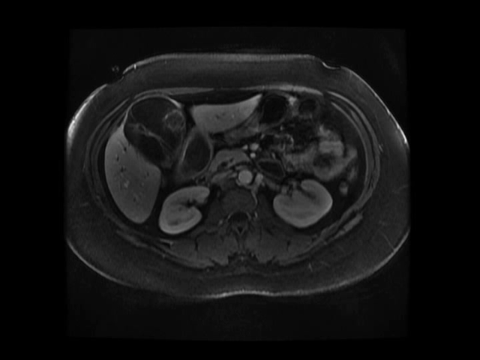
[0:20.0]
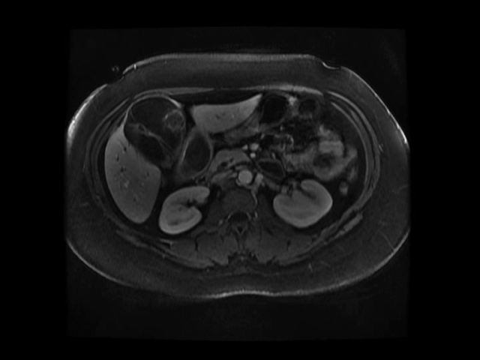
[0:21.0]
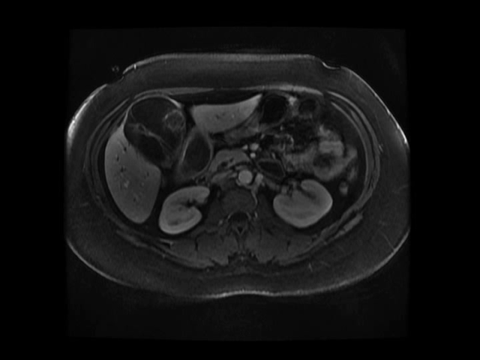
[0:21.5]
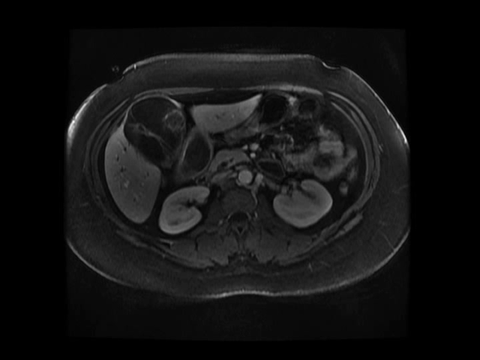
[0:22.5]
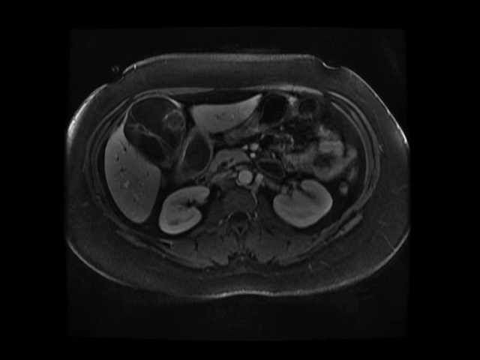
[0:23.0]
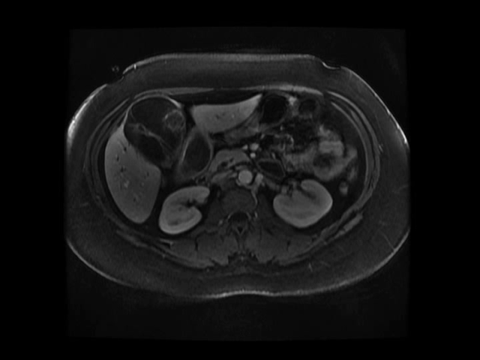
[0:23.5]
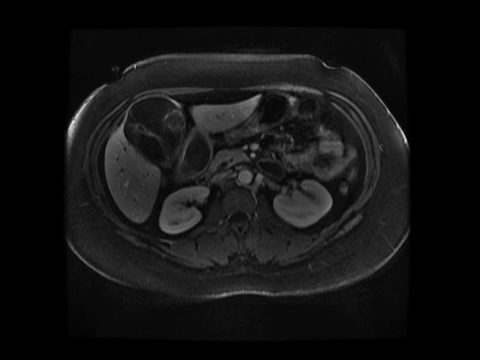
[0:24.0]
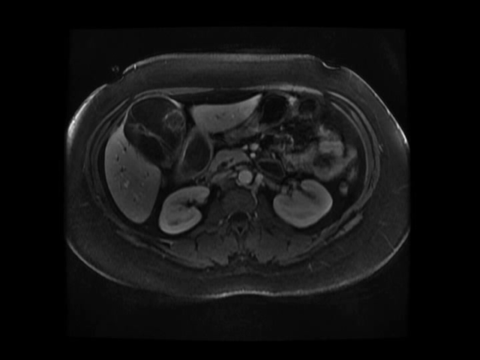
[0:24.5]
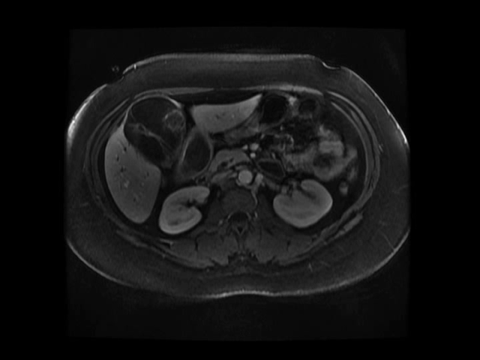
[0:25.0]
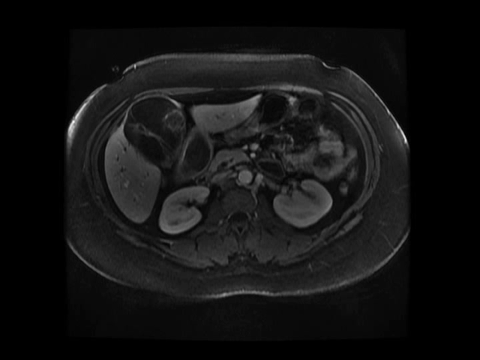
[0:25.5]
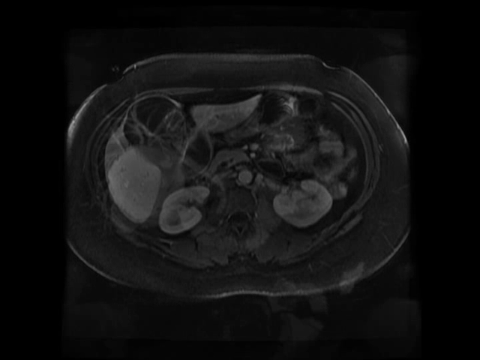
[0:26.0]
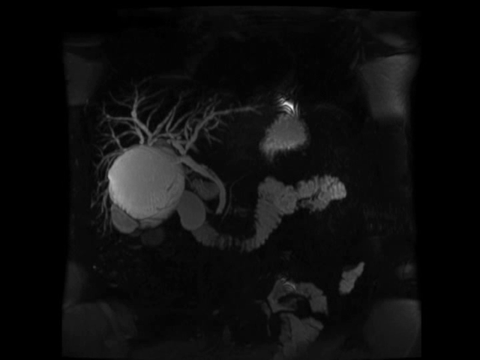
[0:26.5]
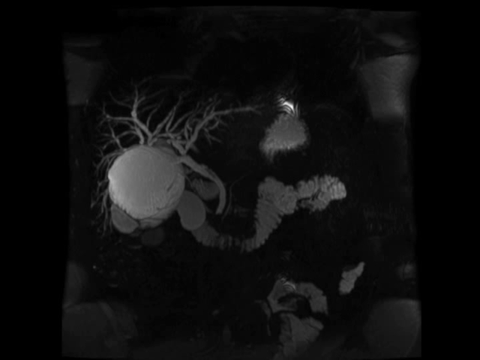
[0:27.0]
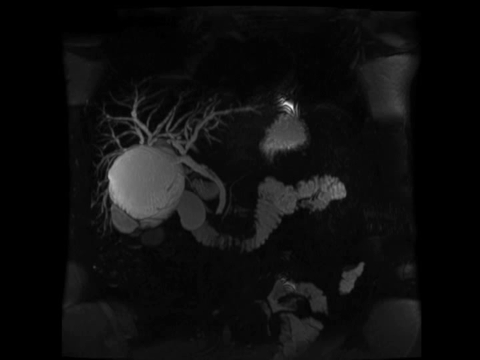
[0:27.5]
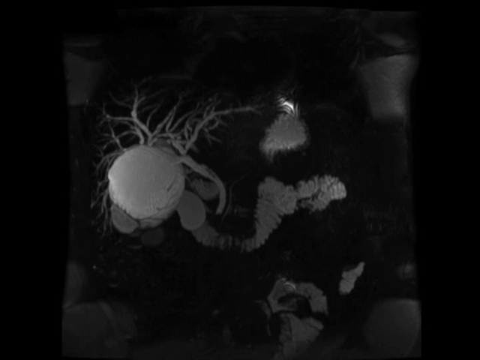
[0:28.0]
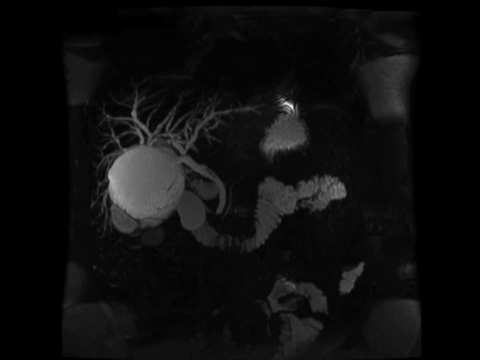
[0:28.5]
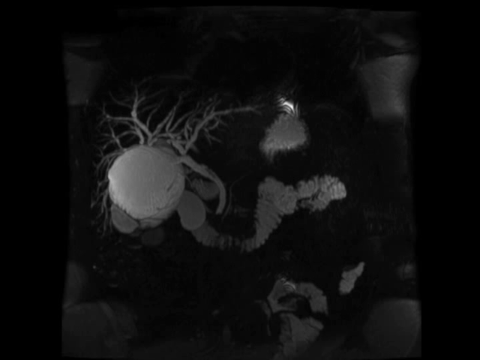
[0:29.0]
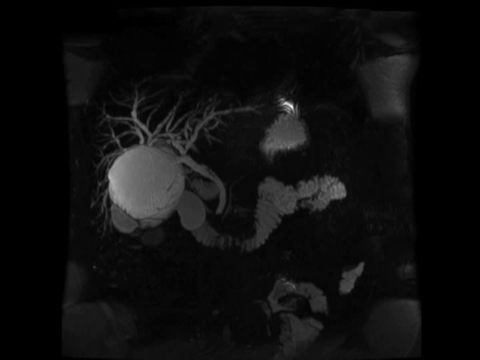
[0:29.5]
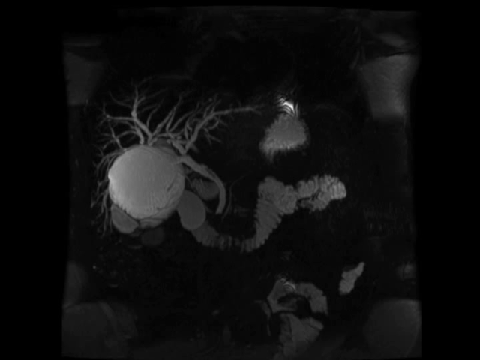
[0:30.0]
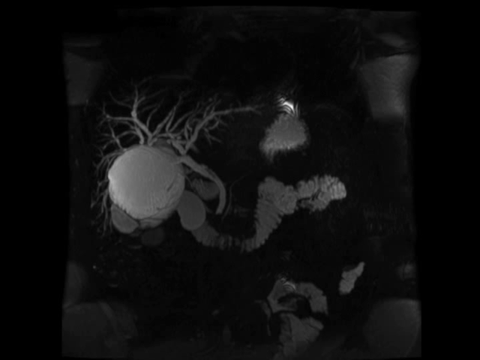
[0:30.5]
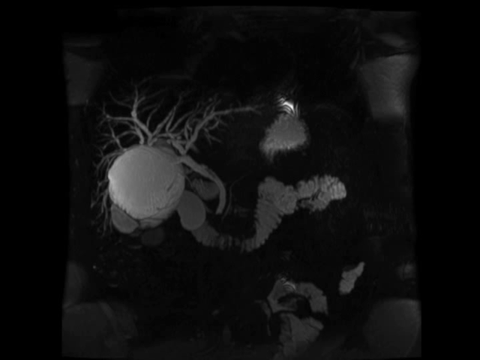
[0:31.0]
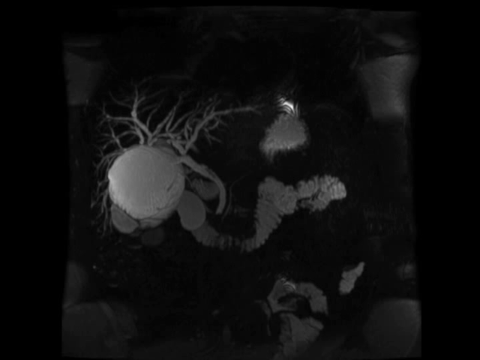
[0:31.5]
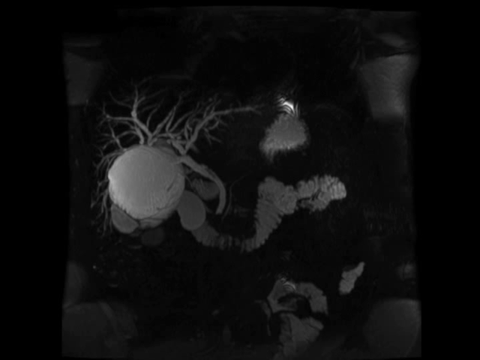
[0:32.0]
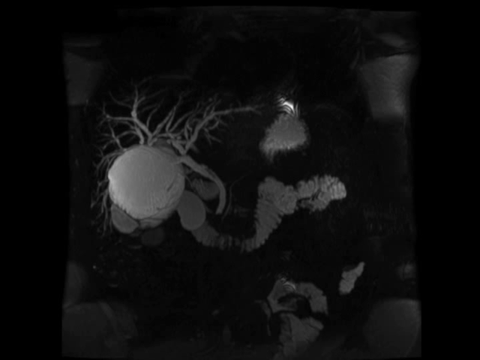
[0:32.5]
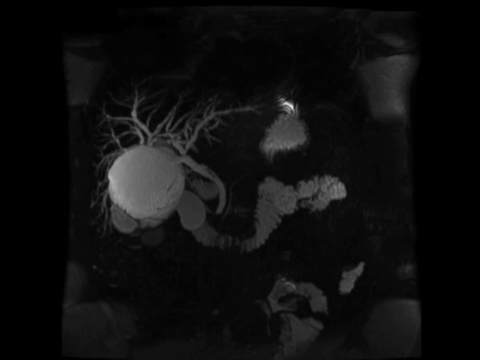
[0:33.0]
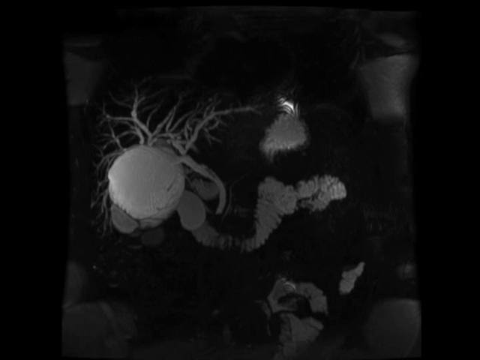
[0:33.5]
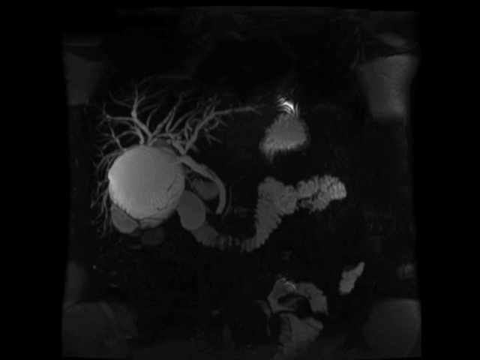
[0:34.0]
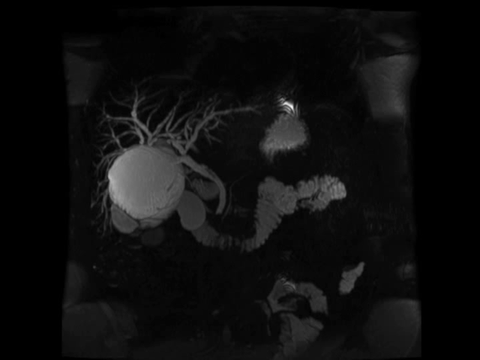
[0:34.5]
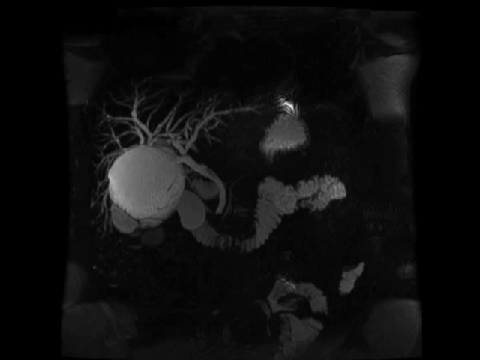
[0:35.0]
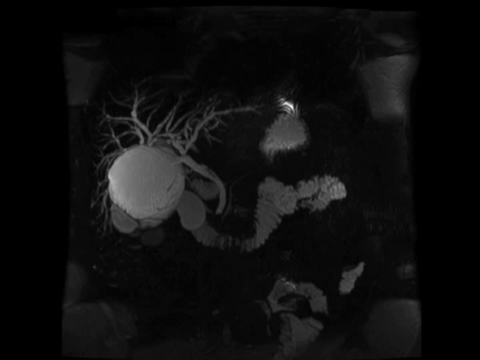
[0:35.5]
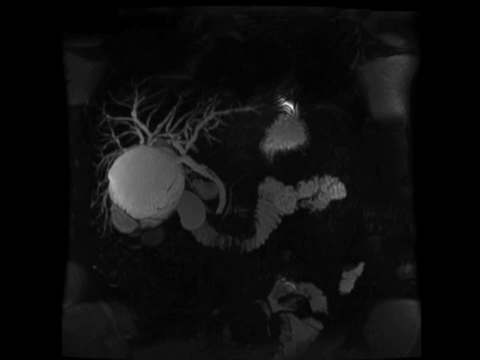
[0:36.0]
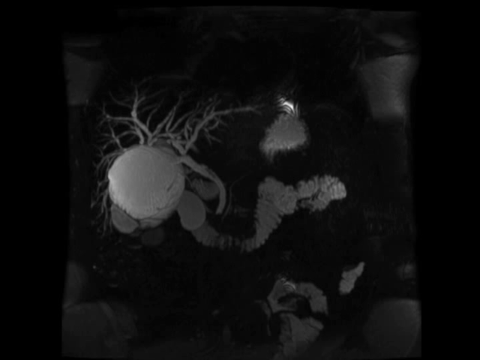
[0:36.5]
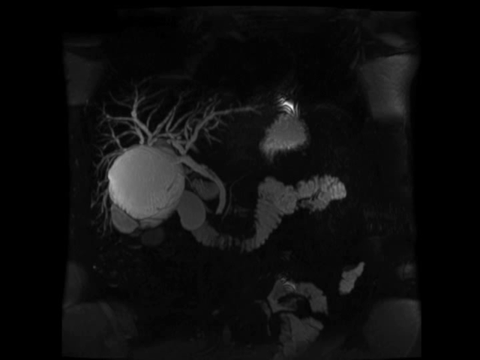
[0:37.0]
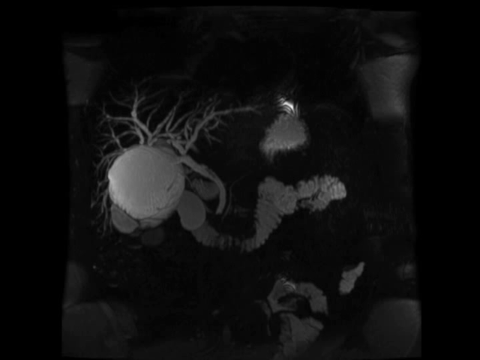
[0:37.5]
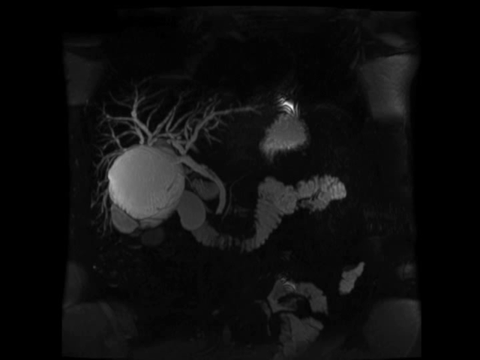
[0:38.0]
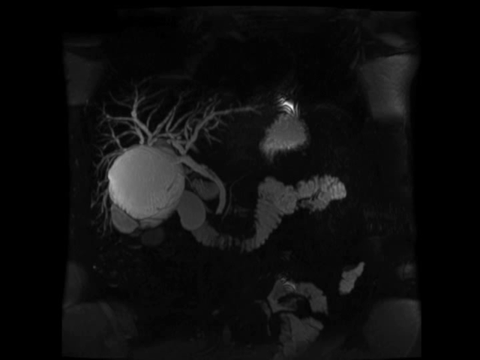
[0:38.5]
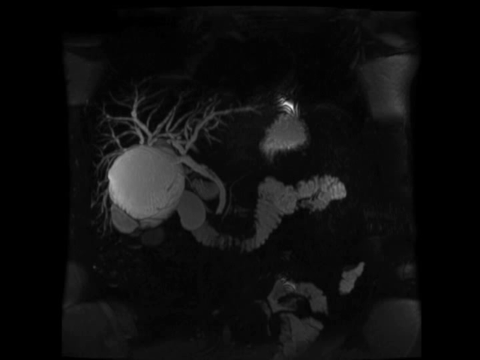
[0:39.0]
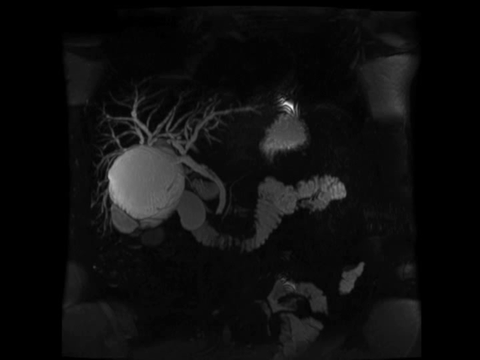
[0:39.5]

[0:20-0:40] The same image, apparently of the abdomen viewed from above, continues; it looks as if the body has been cut in half and viewed from above. Towards the bottom of the oval is something that could be the spine, and on either side of it are two whitish-gray shapes that look like kidney beans, apparently the kidneys on either side of the spine towards the person's back, which appears to be towards the bottom of the image. To the left of the left kidney-bean shape is a shape that looks a lot like the liver; half of it is grayish-white like the kidneys and the top half is dark gray.